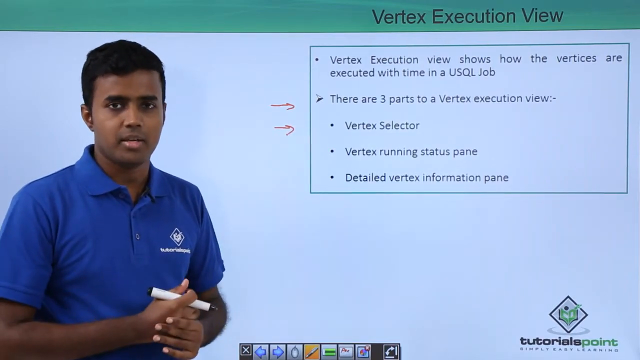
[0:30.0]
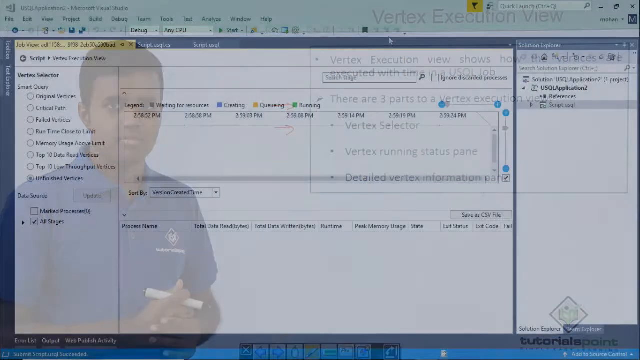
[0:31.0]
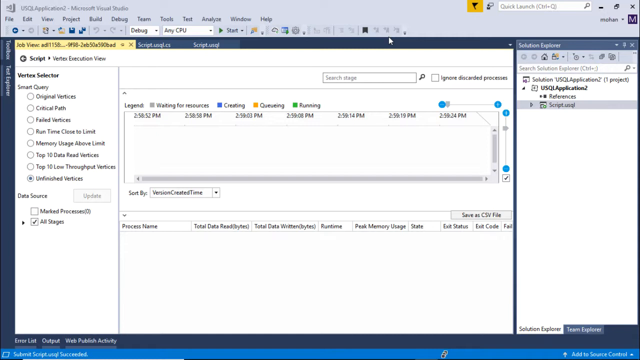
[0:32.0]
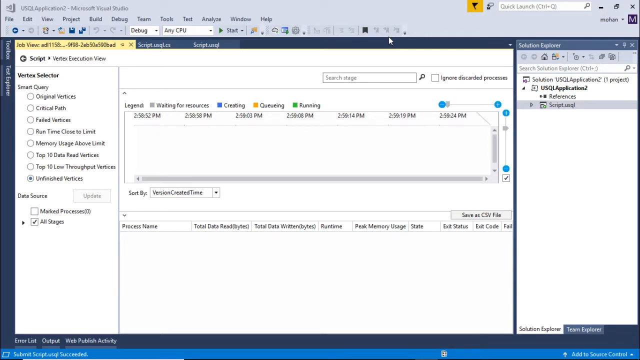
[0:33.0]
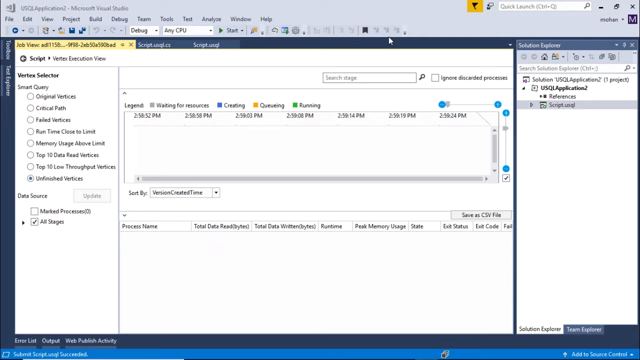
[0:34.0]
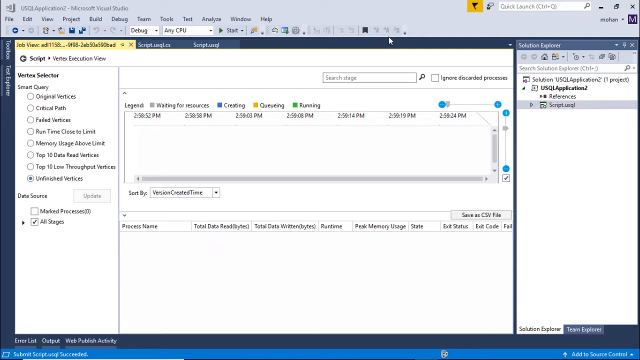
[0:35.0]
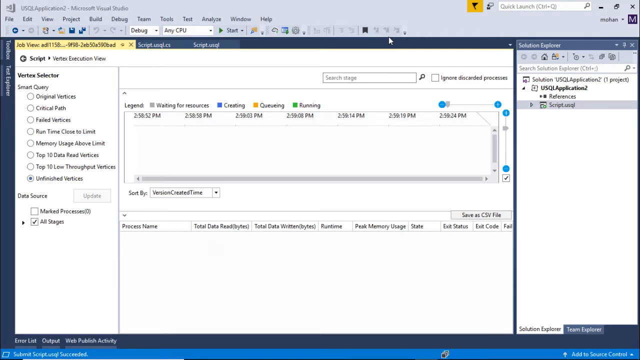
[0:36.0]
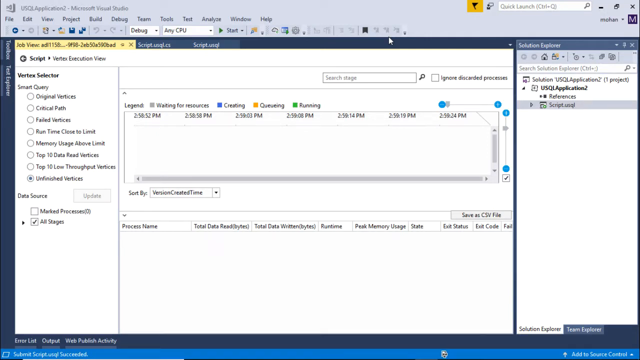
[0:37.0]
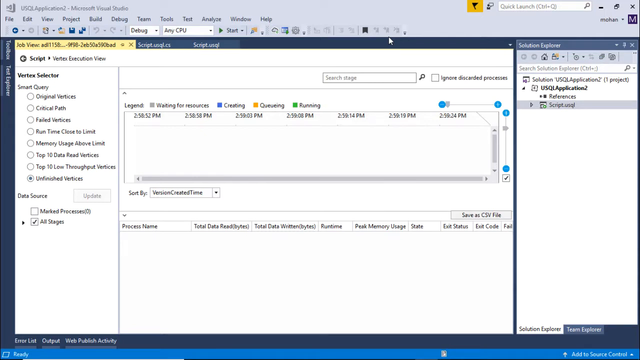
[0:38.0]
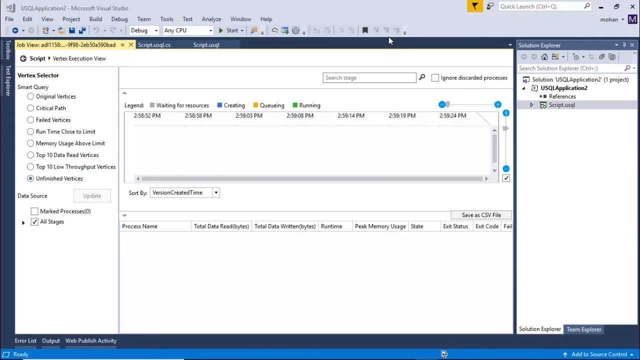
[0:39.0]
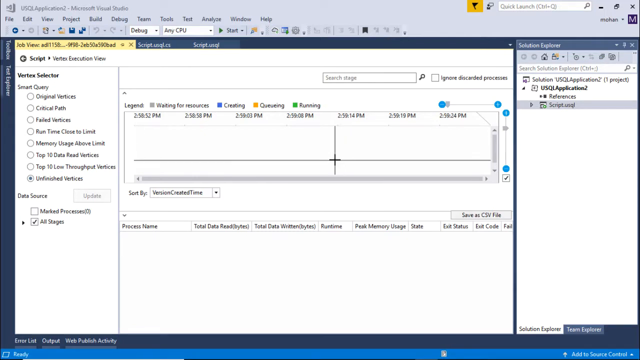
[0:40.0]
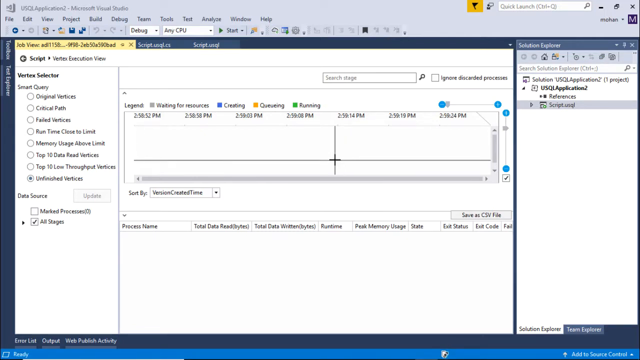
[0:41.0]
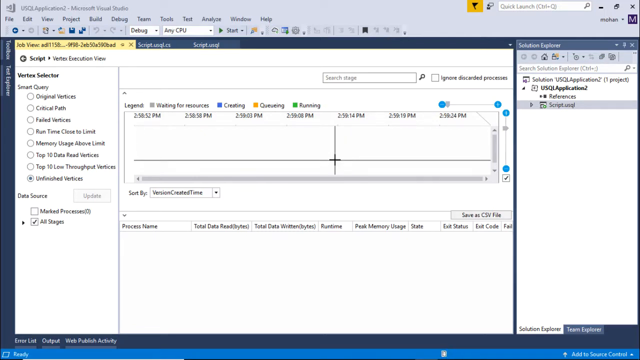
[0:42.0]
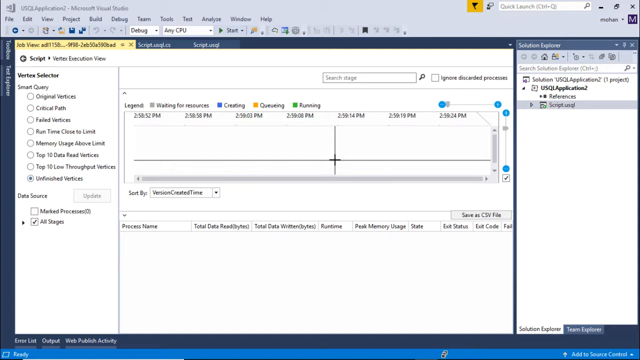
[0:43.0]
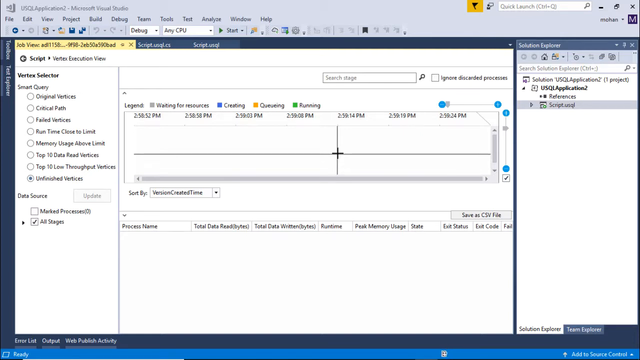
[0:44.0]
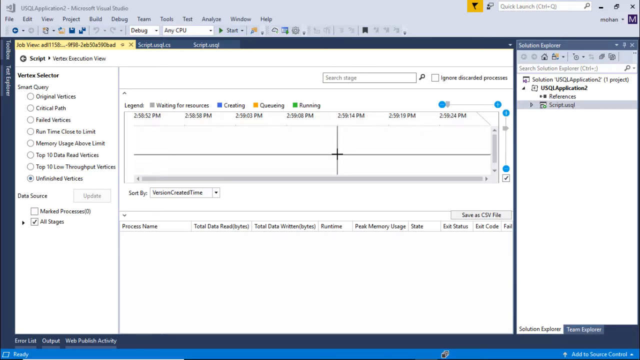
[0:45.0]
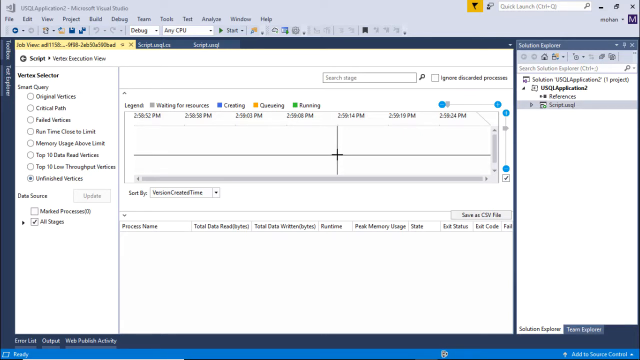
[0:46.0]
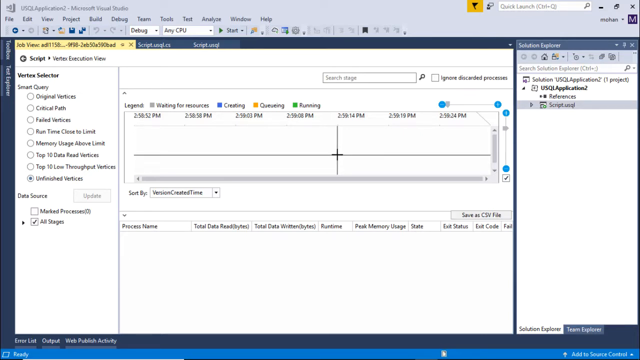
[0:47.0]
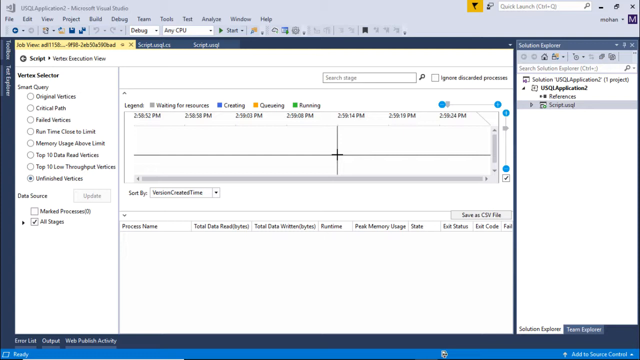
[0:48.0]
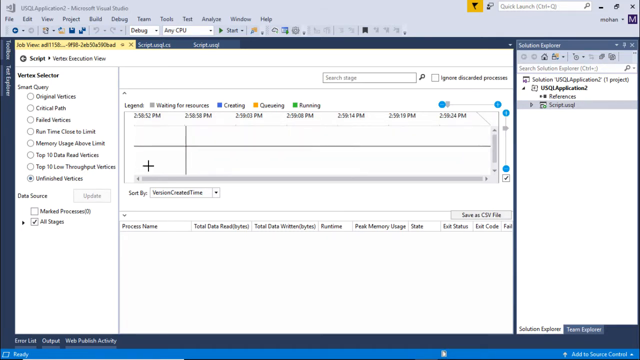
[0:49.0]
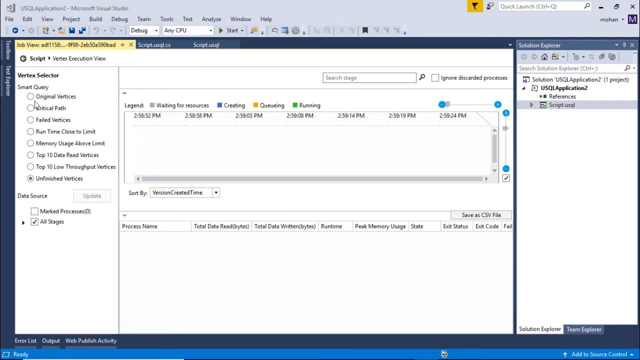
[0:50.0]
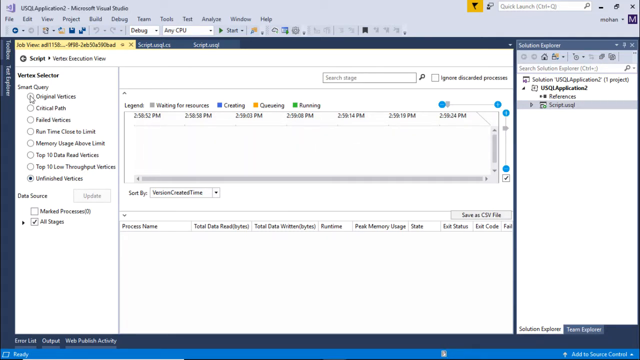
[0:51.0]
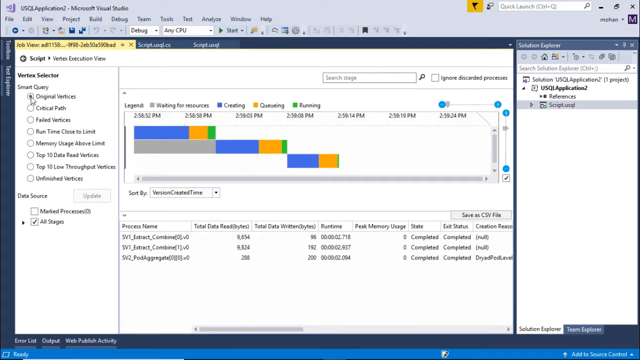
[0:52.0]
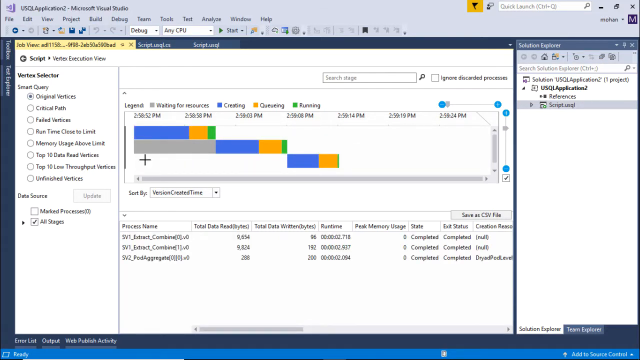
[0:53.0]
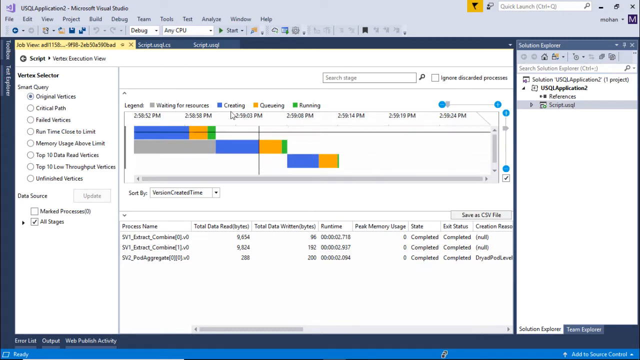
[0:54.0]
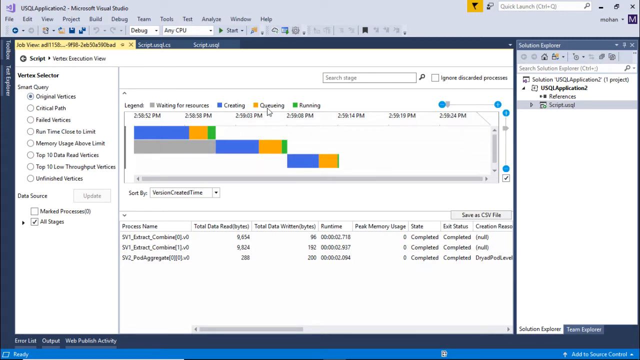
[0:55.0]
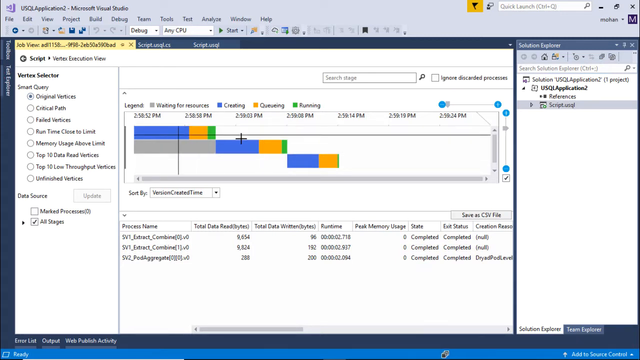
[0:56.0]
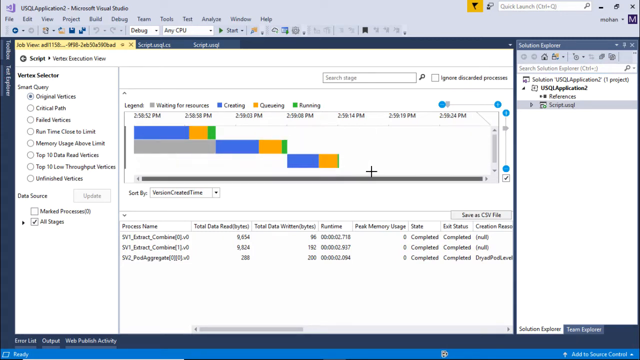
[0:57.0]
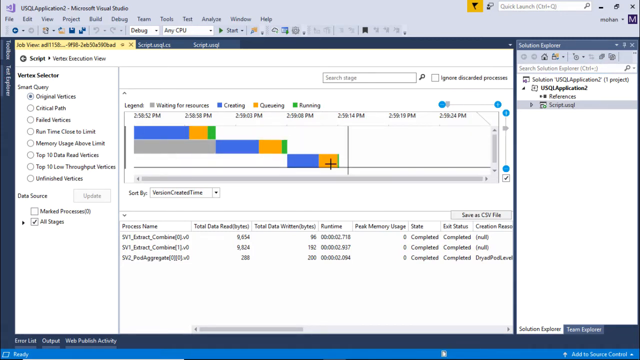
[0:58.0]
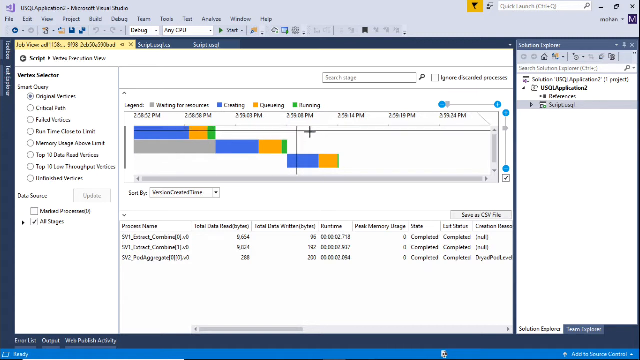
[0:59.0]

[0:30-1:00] The young man faces the camera, chest forward, hands clasped, holding a white marker in his right hand. He wears a royal blue collared shirt with a white logo. The same text box remains on screen, with two red marks from his marker outside of it; it reads "vertex execution view shows how the vertices are executed with time in a USQL job," then an arrow and "there are three parts to a vertex execution view," with bullet points "vertex selector," "vertex running status pane" and "detailed vertex information pane." The screen then transitions to a screenshot of a computer with a detailed layout view: a white background with a significant amount of text that cannot be deciphered. A mouse scrolls, selects and moves about the screen as colors and a chart appear, and the mouse continues to move.